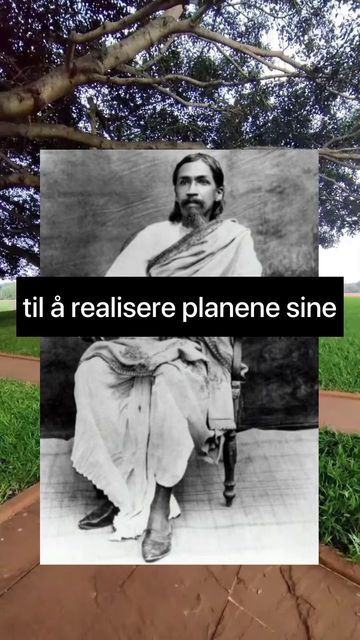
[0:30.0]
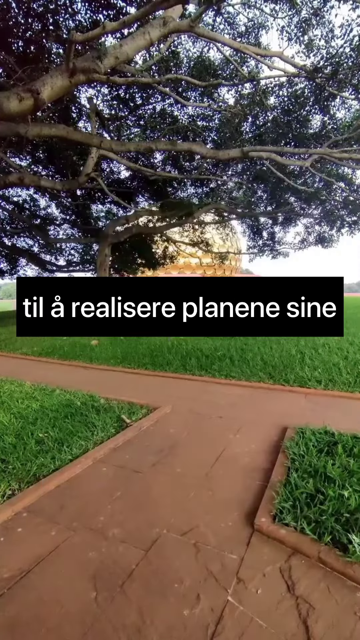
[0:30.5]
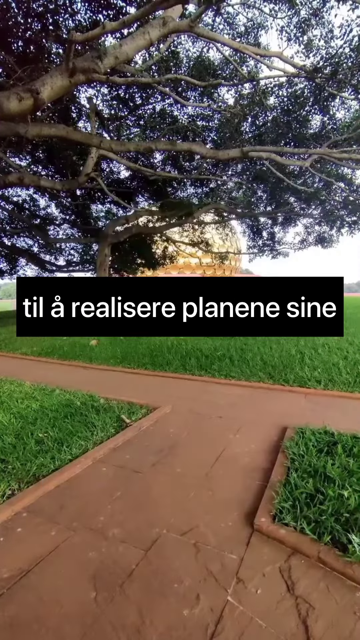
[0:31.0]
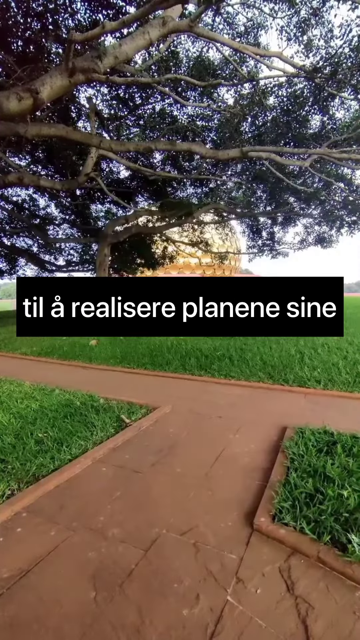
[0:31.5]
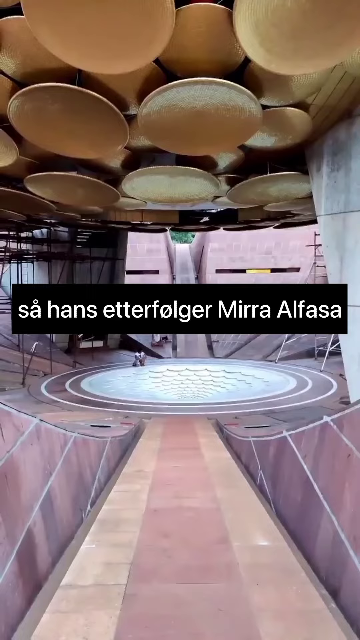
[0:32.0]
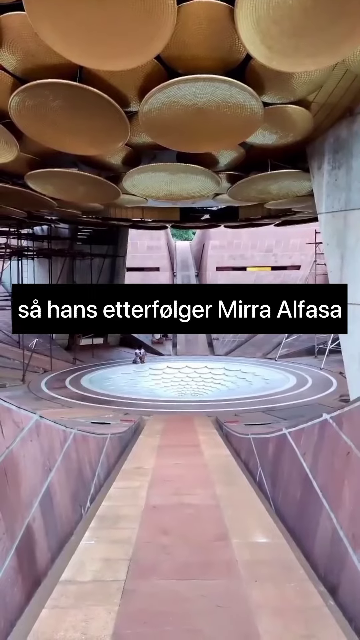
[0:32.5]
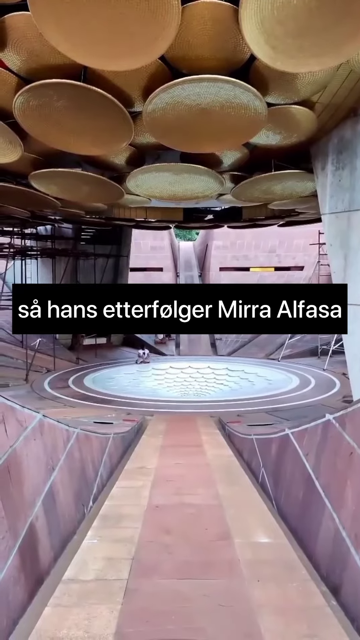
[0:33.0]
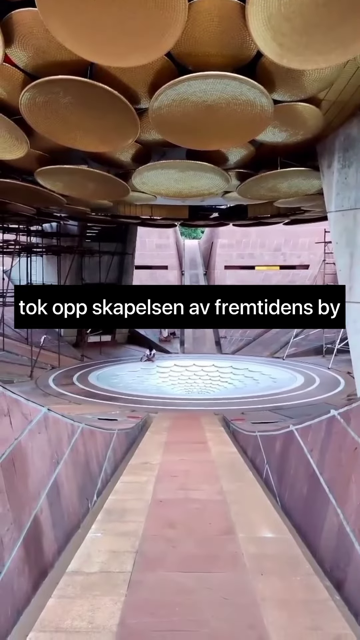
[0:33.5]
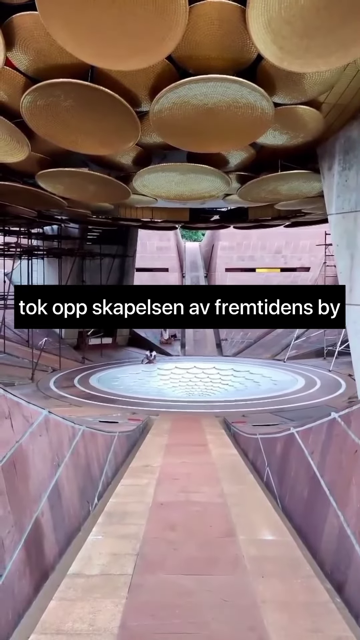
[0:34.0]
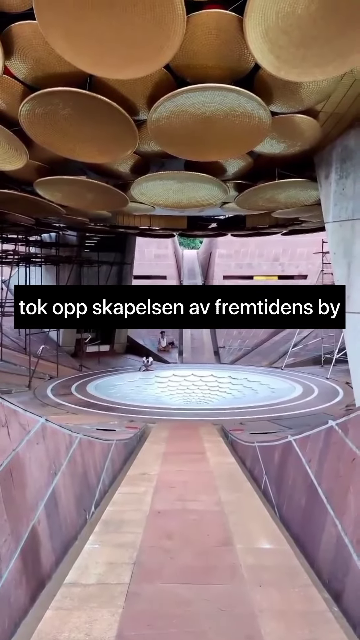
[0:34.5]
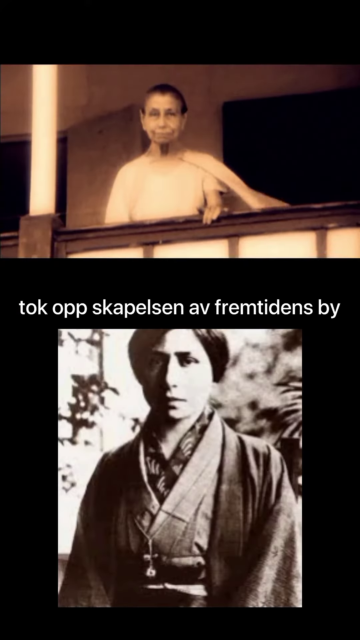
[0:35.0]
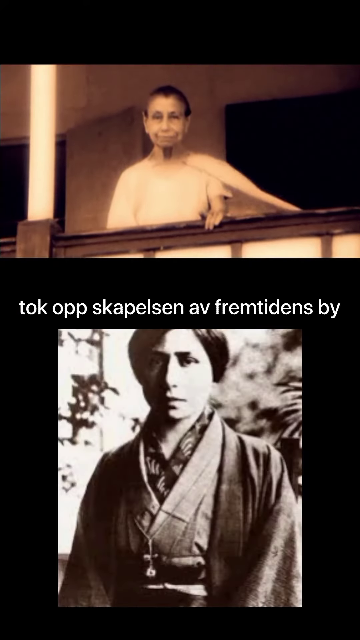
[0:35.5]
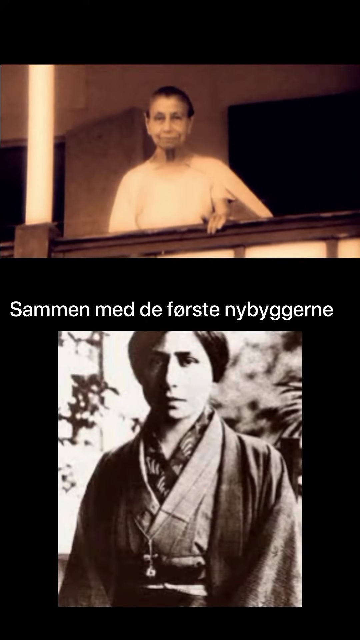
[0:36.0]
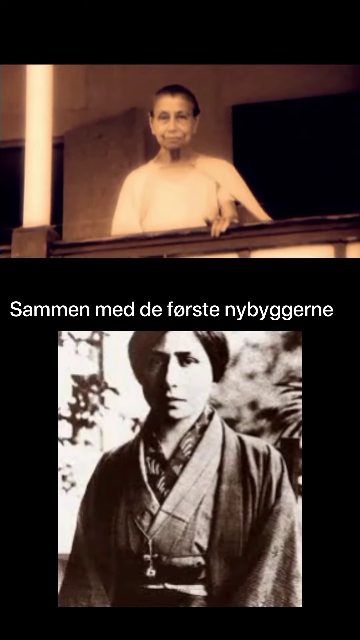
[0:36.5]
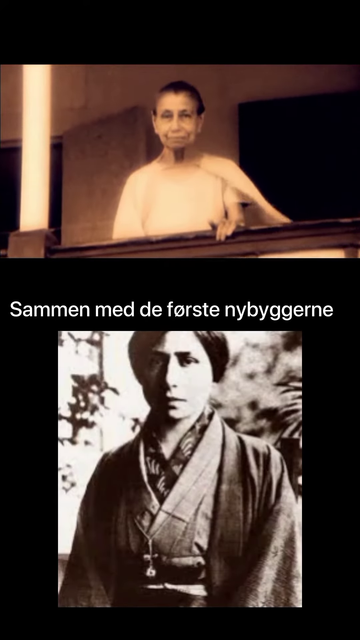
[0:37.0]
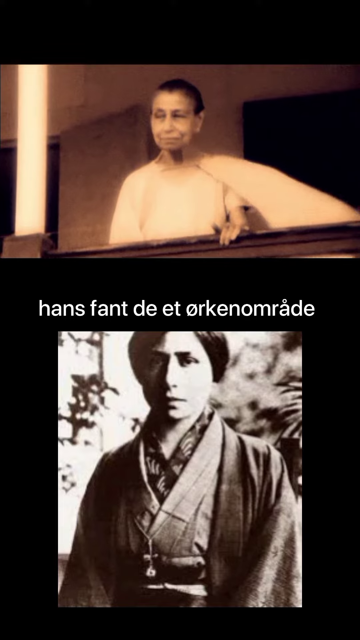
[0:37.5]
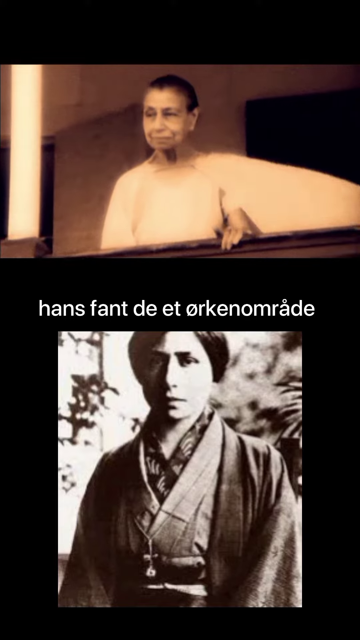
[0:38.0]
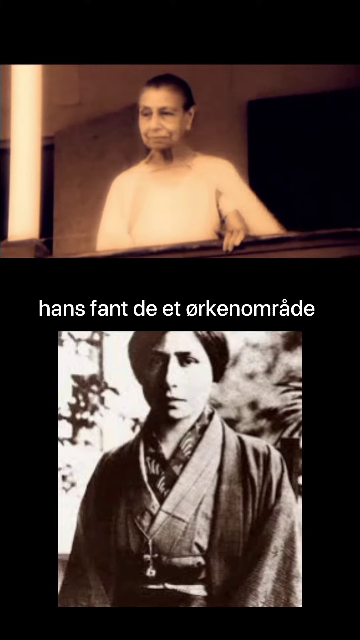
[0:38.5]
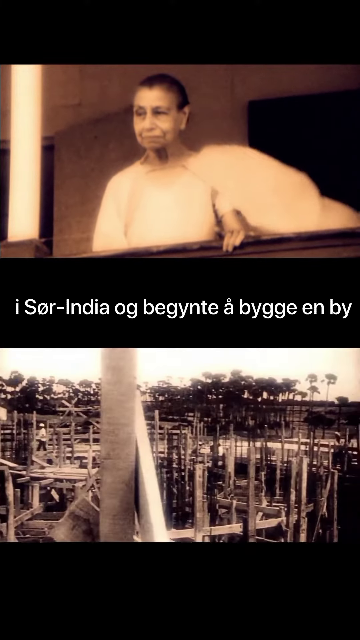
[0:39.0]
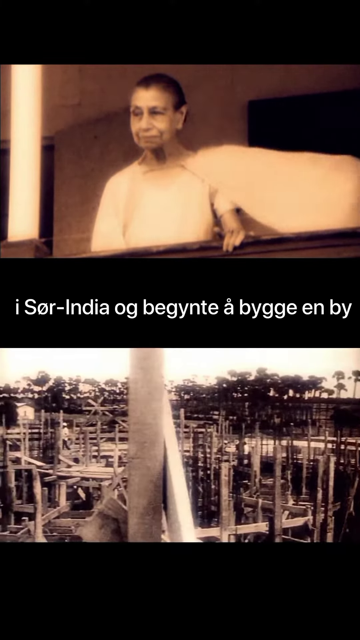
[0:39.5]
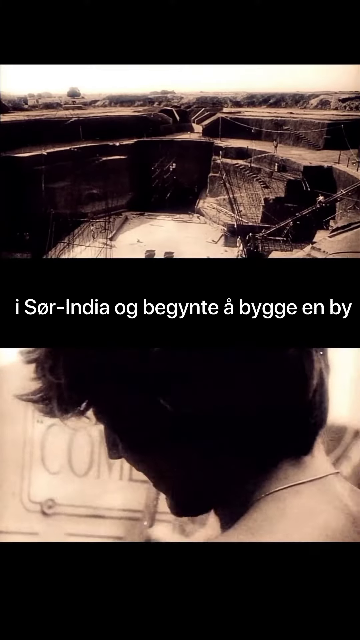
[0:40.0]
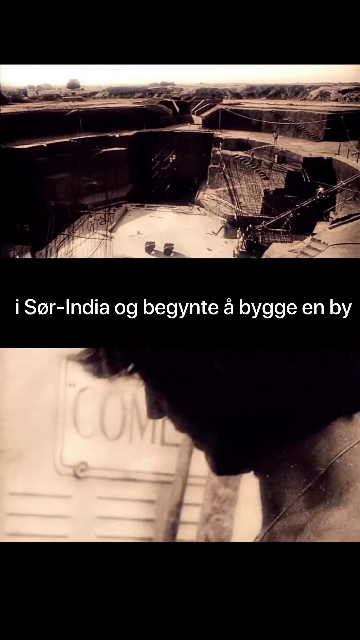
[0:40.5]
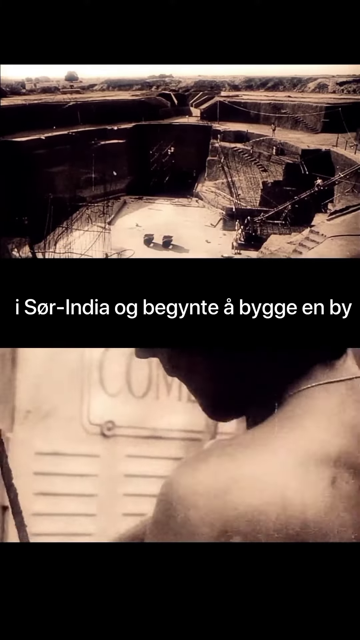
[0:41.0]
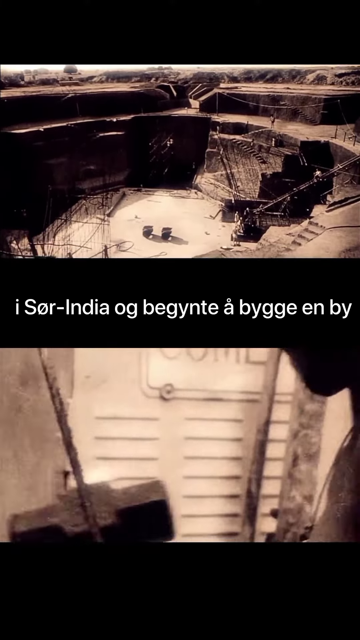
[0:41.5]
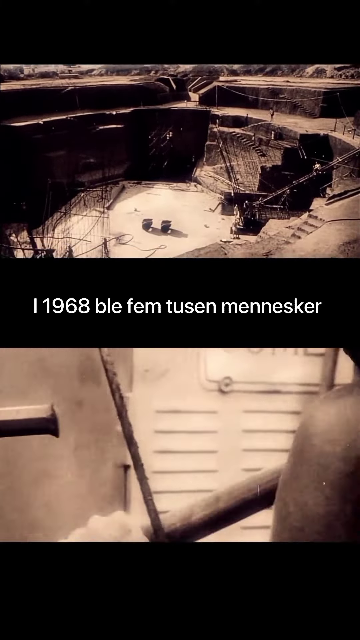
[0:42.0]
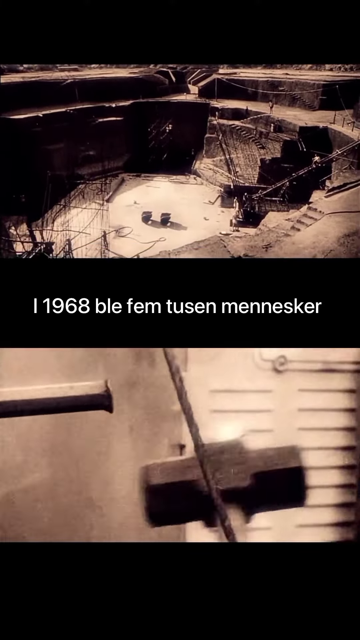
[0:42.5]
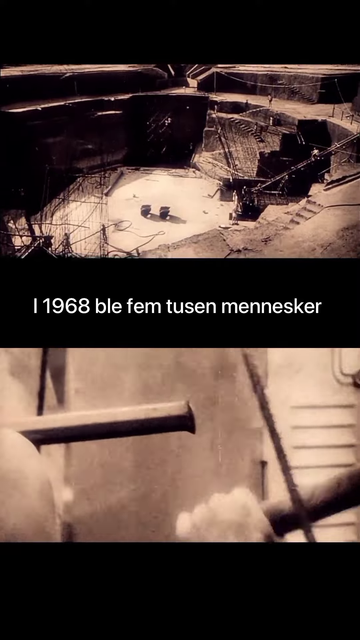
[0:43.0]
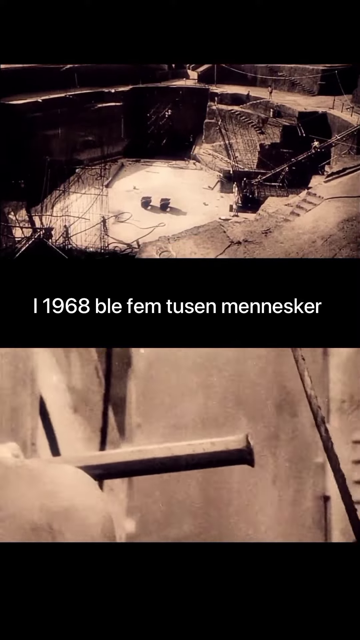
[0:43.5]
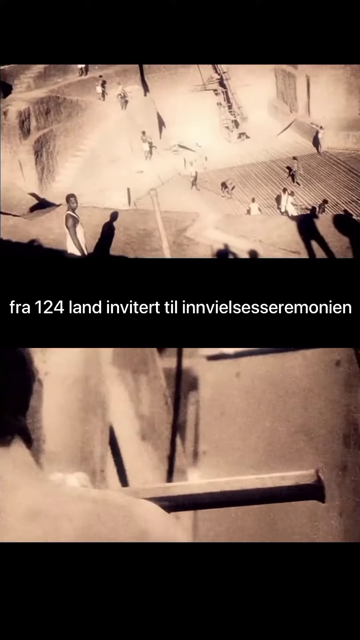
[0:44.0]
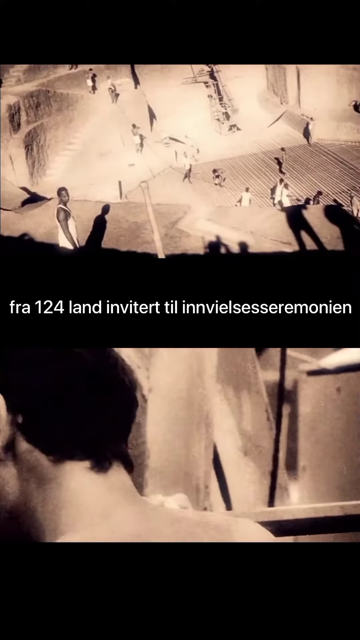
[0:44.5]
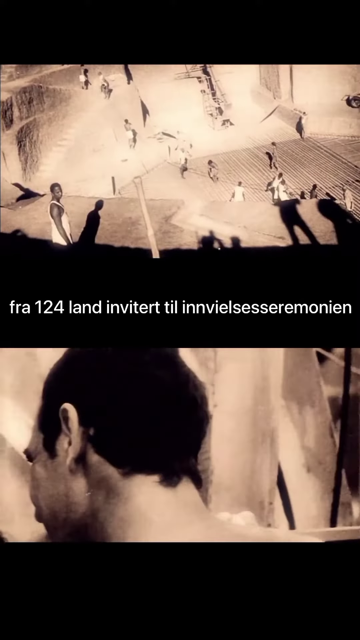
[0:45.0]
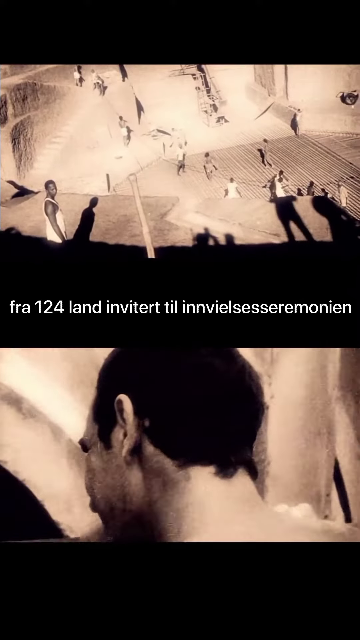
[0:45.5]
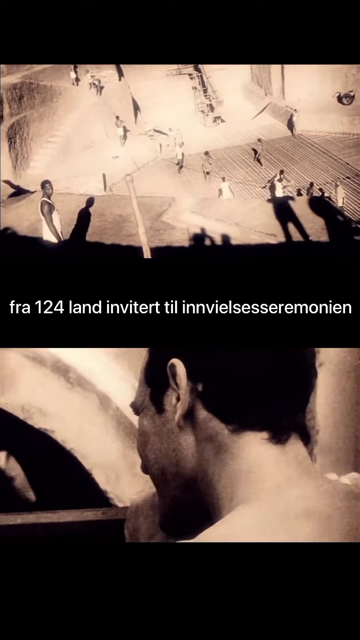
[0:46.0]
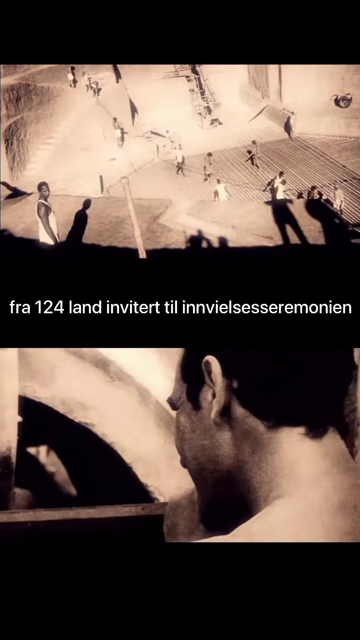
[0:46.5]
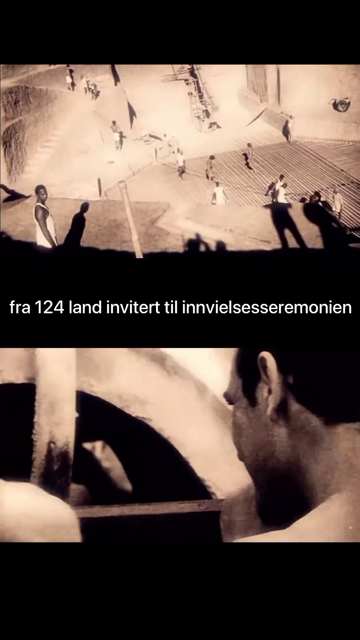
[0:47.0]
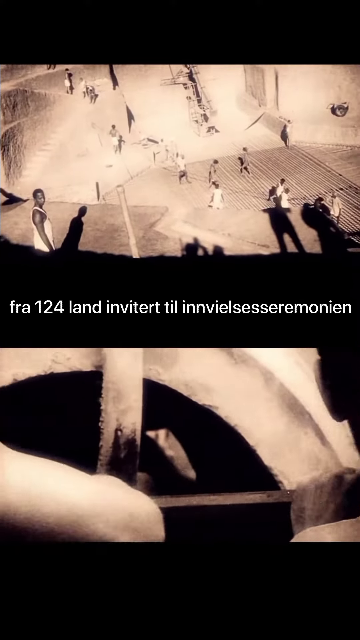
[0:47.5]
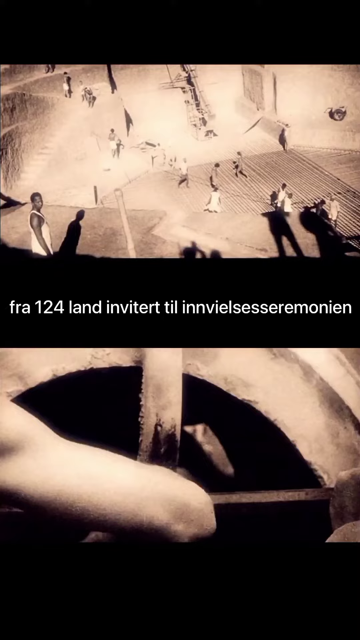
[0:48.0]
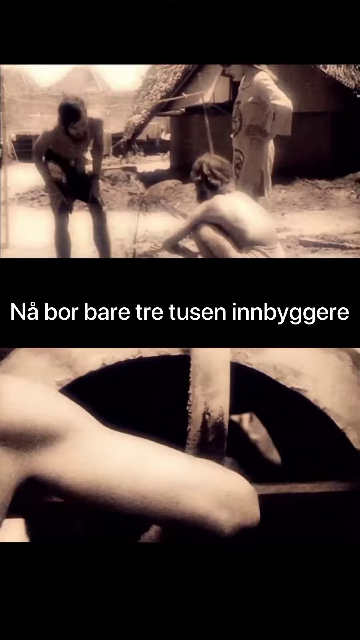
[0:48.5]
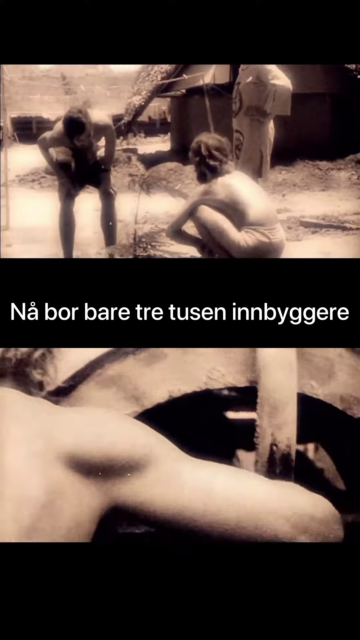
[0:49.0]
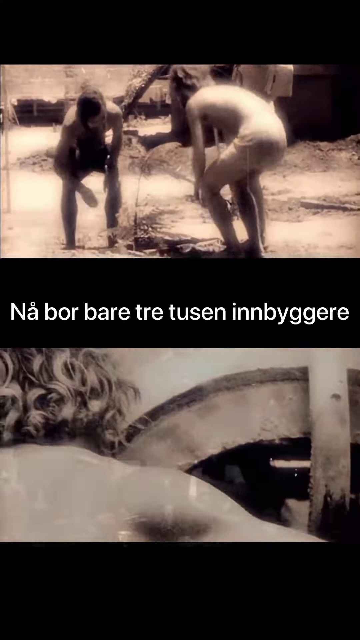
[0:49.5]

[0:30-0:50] The same split-screen style continues, with text in the middle and moving pictures above and below it. The text is not understandable, but it seems possibly to concern the history of the building: old photos and old videos are shown, apparently of the building of this site in India. It has a behind-the-scenes feel and includes a shot of an unidentified woman. The date "1968" appears, possibly when the structure was built. The language seems to be a Scandinavian one.